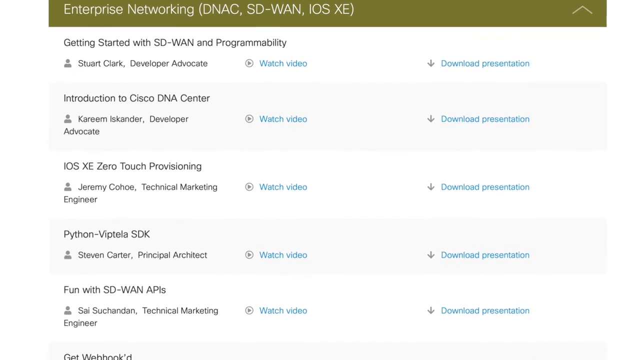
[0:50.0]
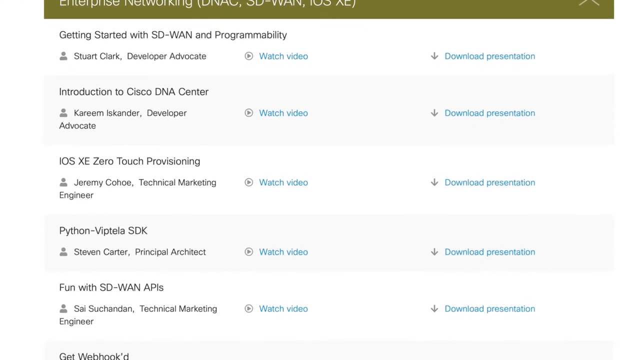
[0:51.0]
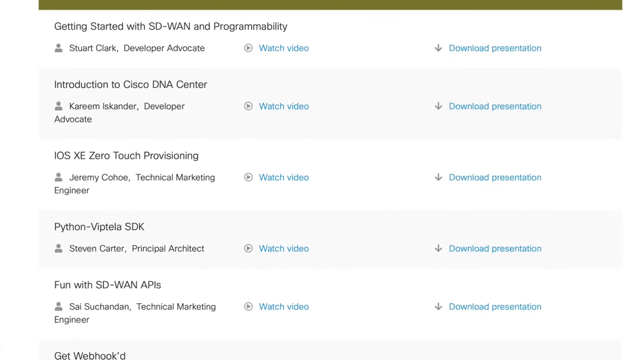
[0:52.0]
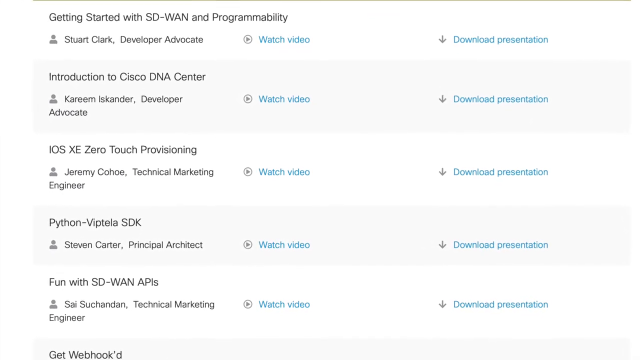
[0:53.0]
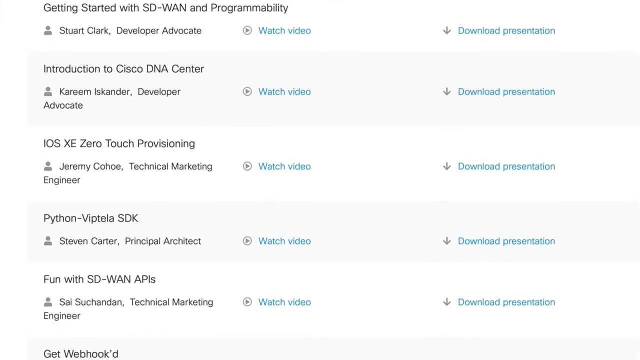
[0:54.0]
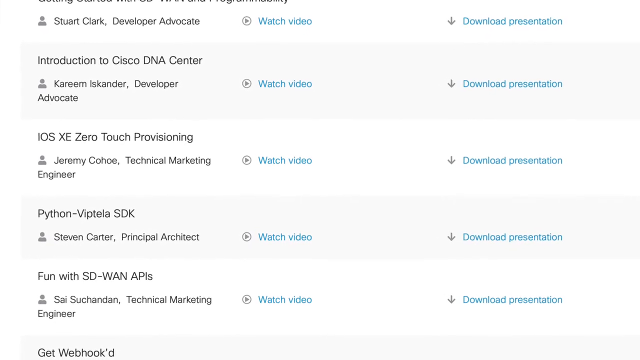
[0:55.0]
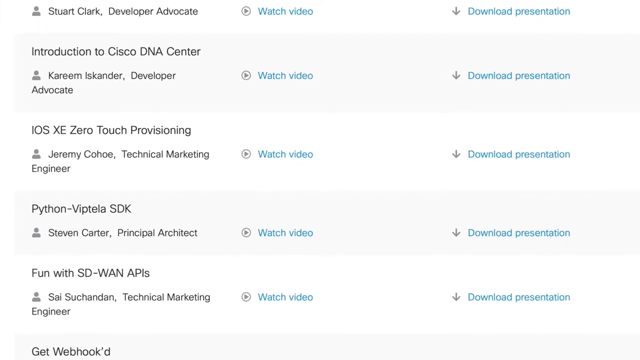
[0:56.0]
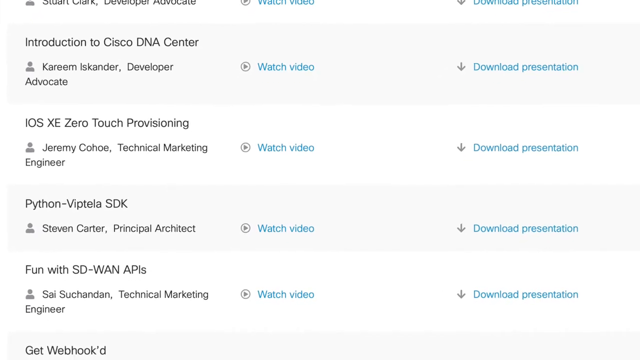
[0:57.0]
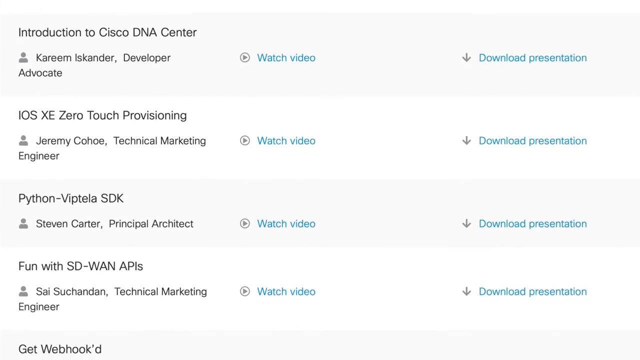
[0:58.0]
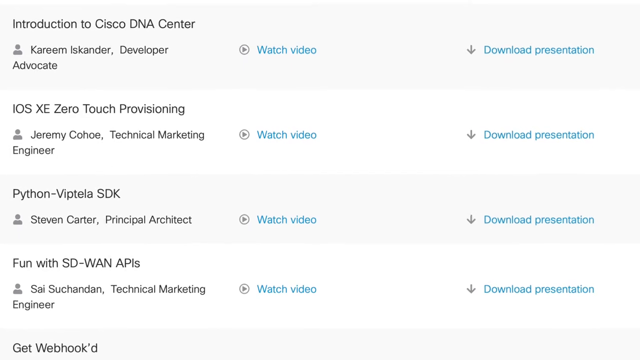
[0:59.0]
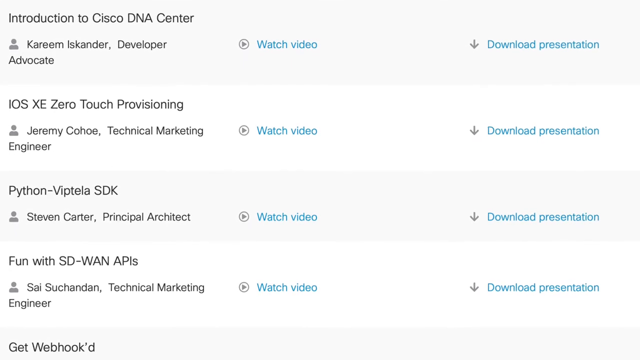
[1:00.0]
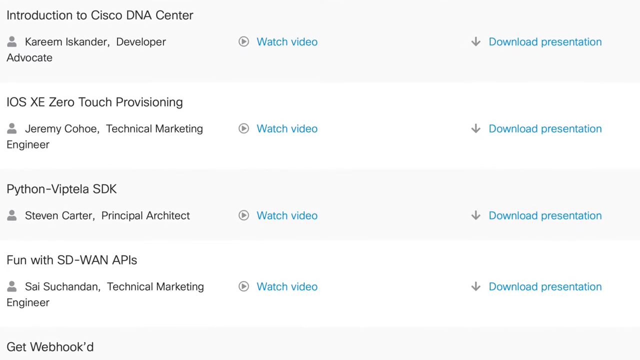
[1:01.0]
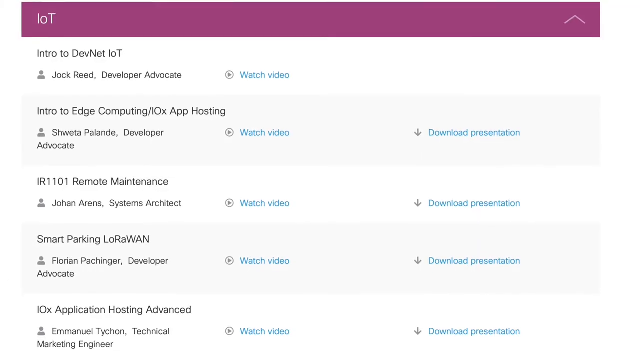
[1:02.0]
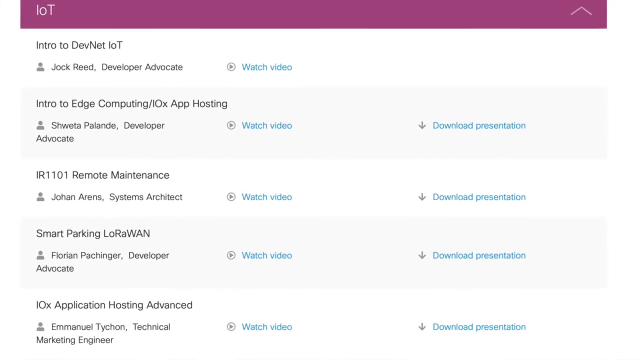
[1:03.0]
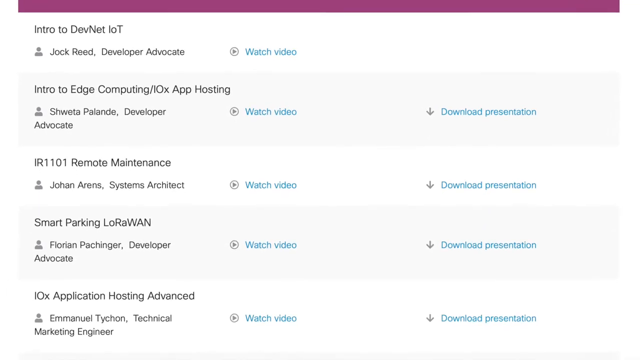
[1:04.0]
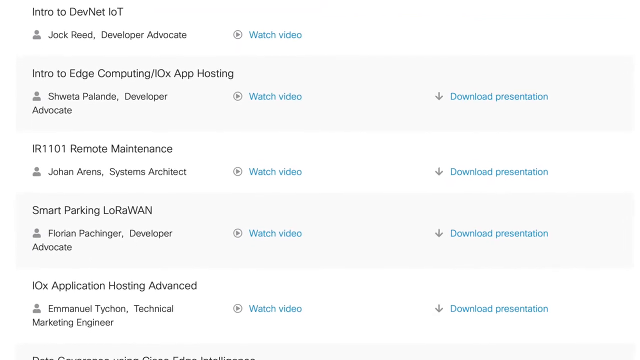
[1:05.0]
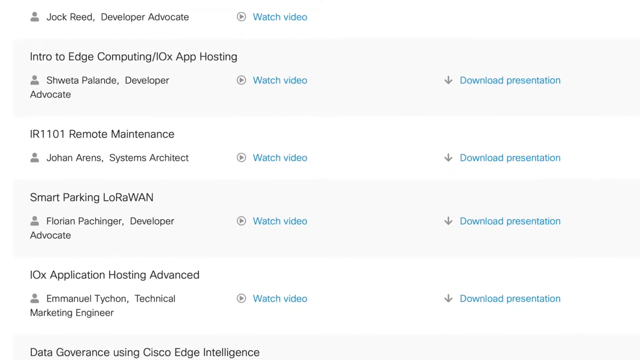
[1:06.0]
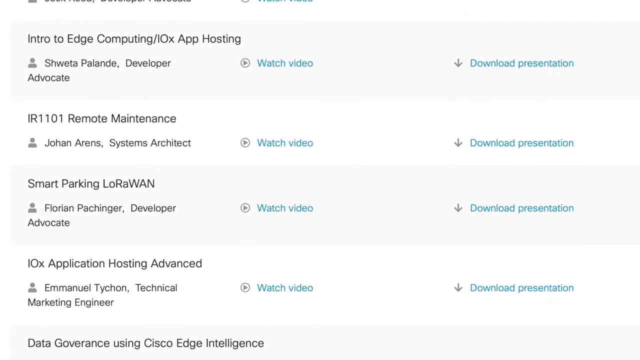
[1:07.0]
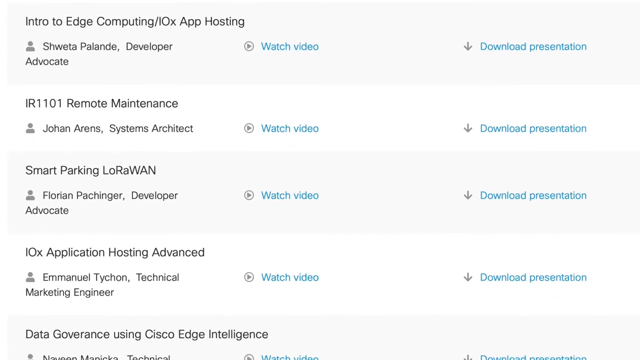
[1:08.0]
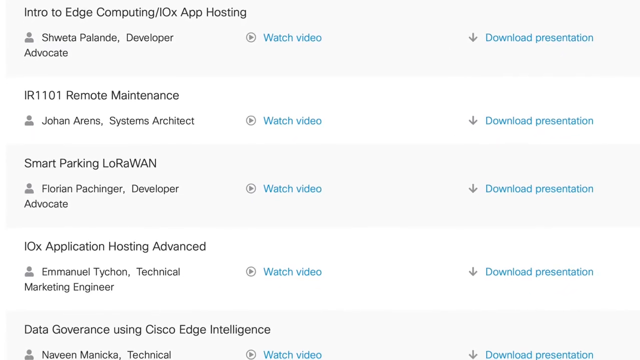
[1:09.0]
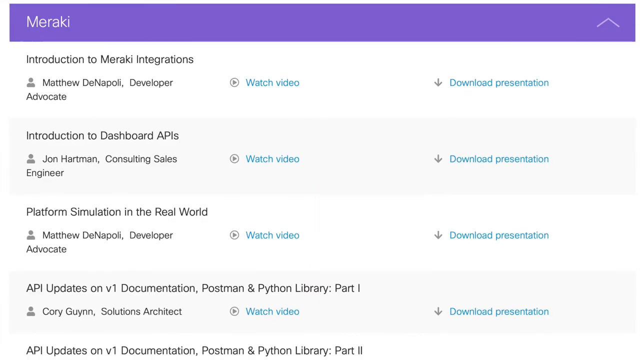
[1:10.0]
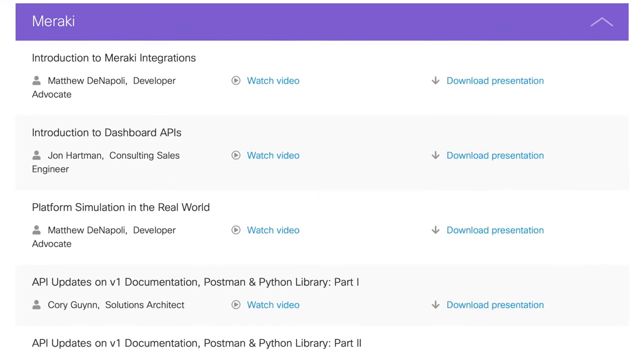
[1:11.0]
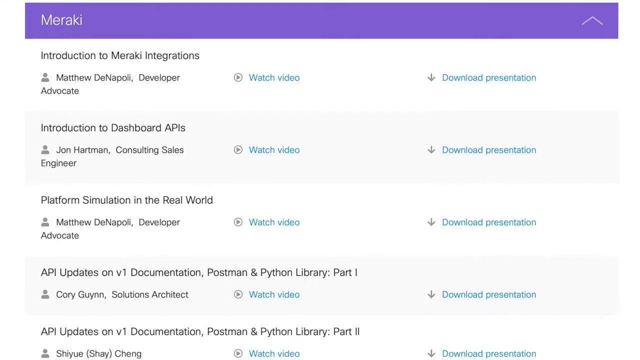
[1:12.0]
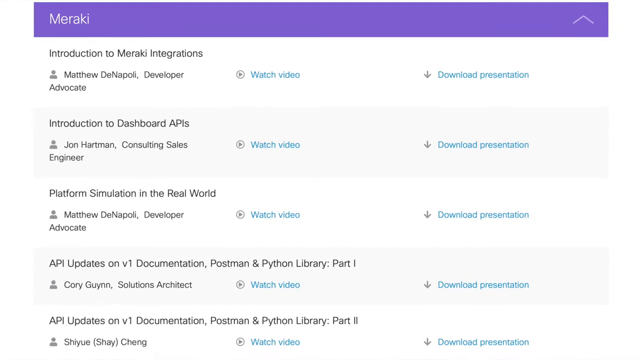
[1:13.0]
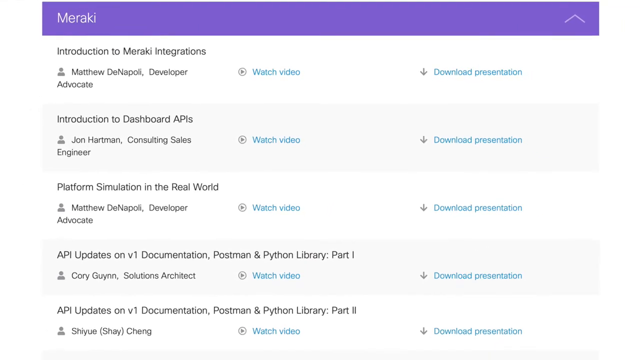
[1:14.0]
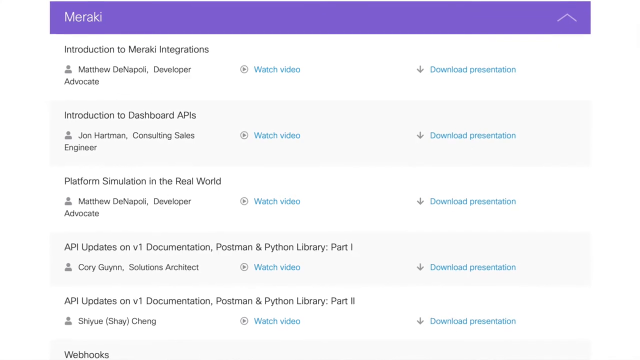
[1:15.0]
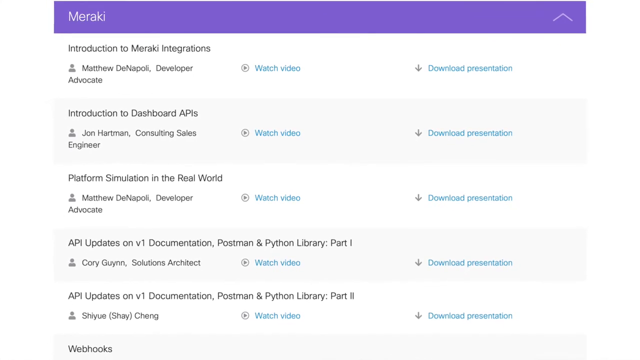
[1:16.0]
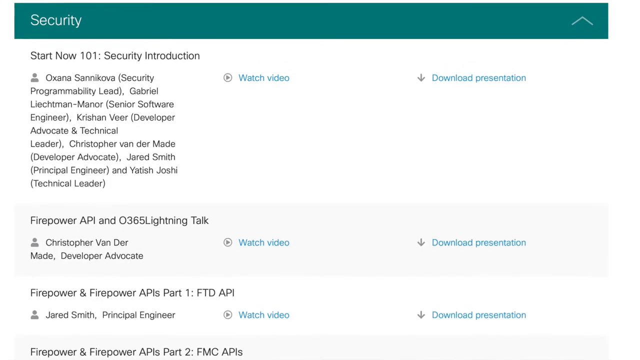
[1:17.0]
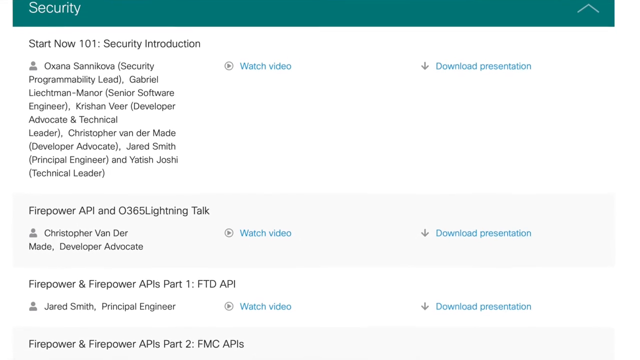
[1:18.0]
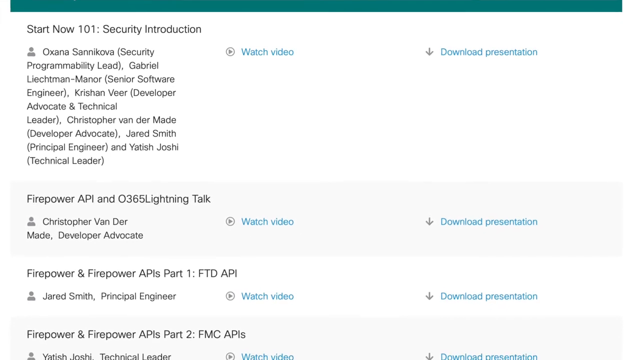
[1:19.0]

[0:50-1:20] A page shows four clearly visible names, with entries about how to get started and an introduction. The middle column shows the watch video link in blue, and download the presentation has a gray arrow on its left side. The view zooms in and the words get larger. The next page is IoT, with a purple line at the top, and it also zooms in. Then comes a page labeled "EMERAKI," which zooms in. Next is a security page with "start security now 101," an introduction, and the Firepower API, with multiple paragraphs describing these topics and their hyperlinks. The words keep coming closer. The watch video link has a small right-pointing triangle with a circle around it. Other listed topics include Python and an introduction.